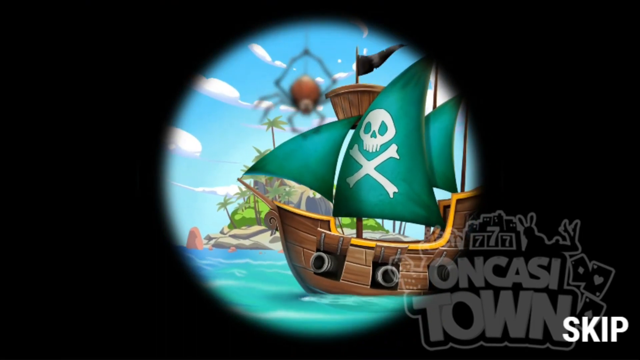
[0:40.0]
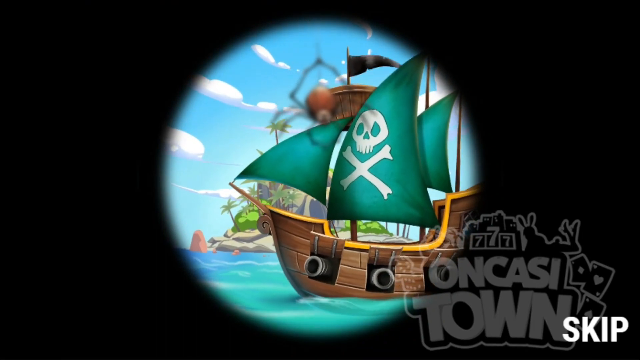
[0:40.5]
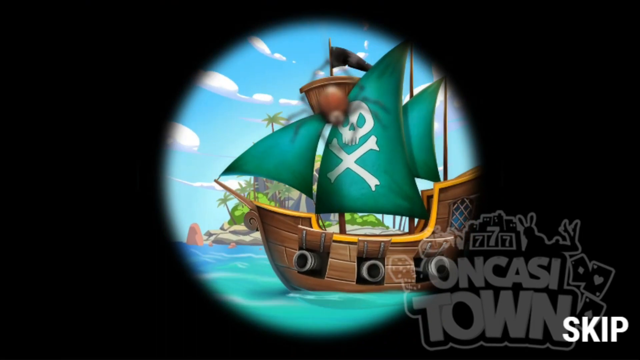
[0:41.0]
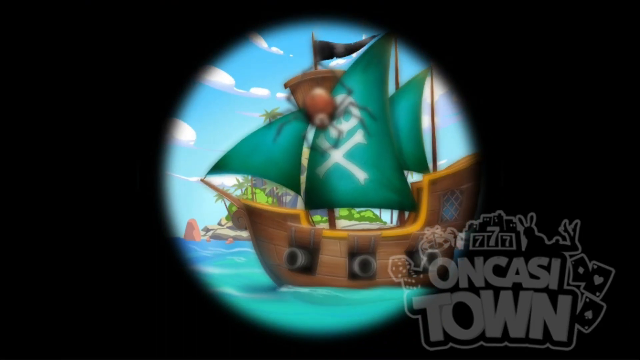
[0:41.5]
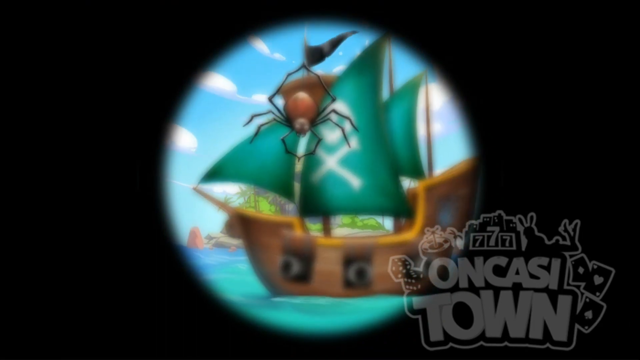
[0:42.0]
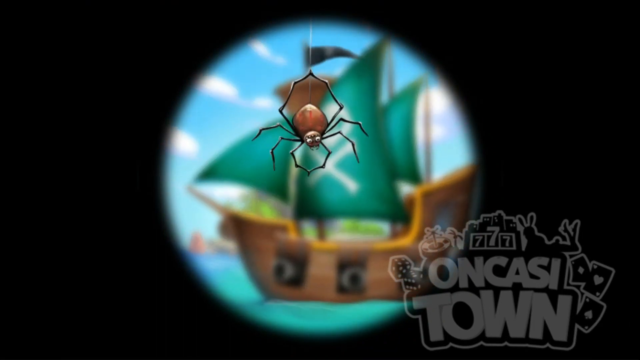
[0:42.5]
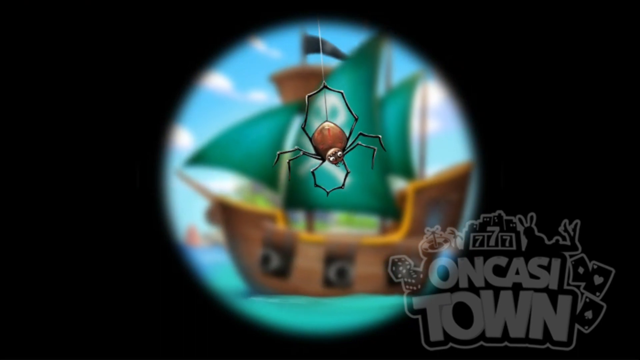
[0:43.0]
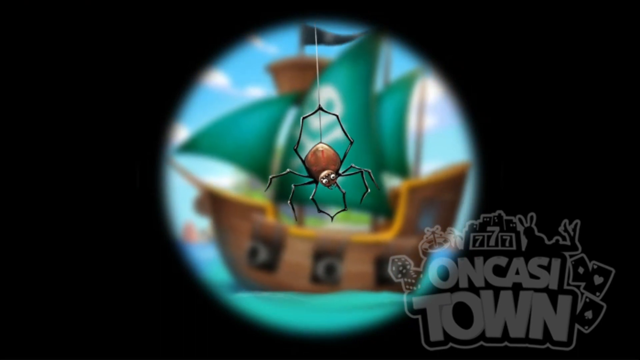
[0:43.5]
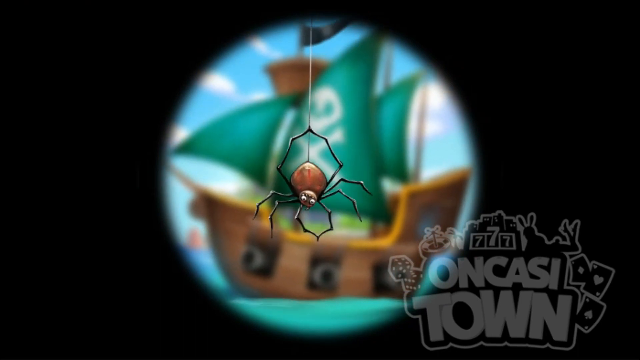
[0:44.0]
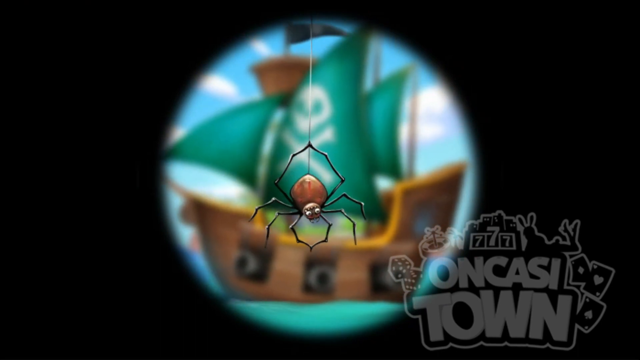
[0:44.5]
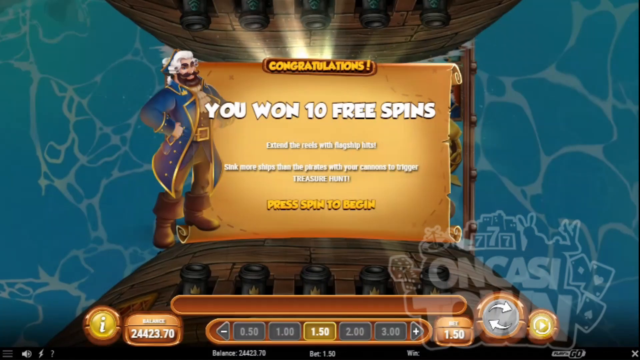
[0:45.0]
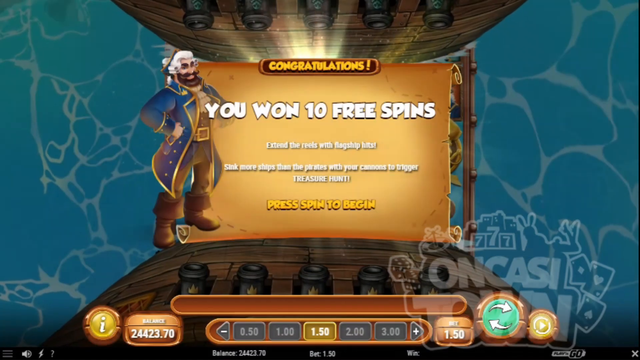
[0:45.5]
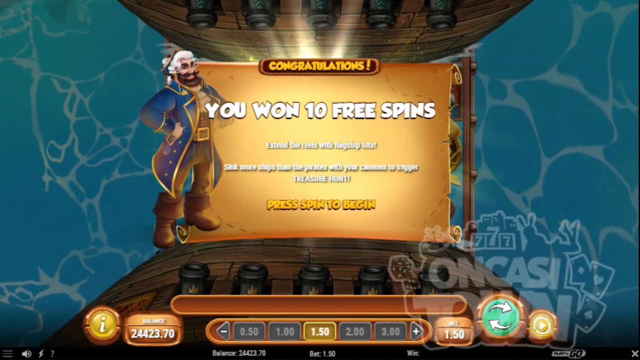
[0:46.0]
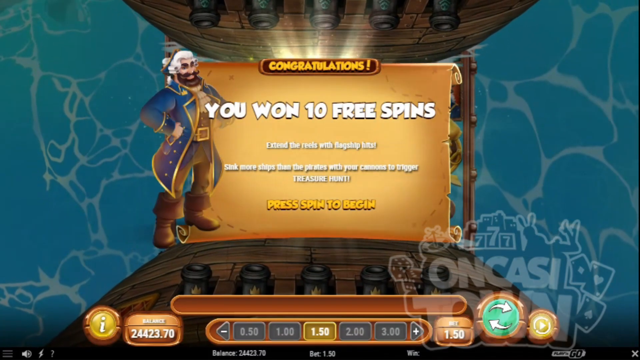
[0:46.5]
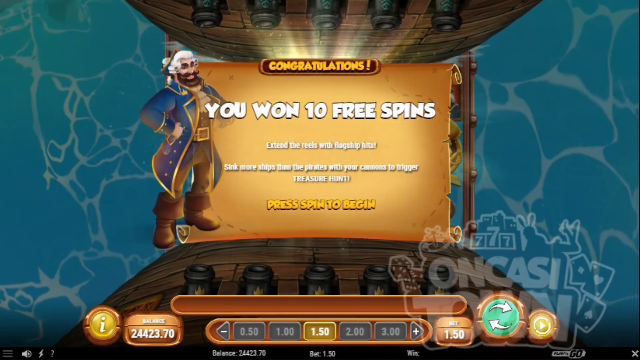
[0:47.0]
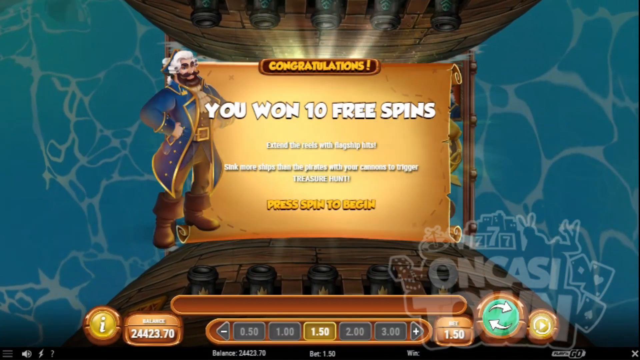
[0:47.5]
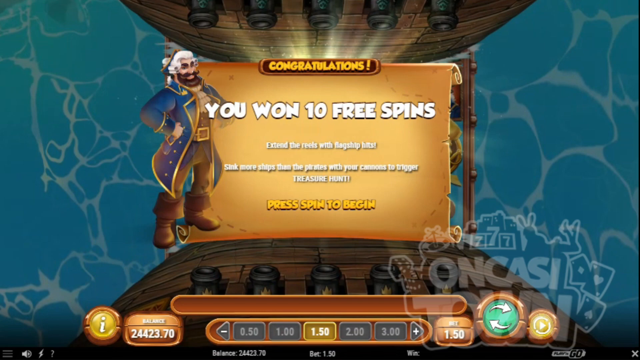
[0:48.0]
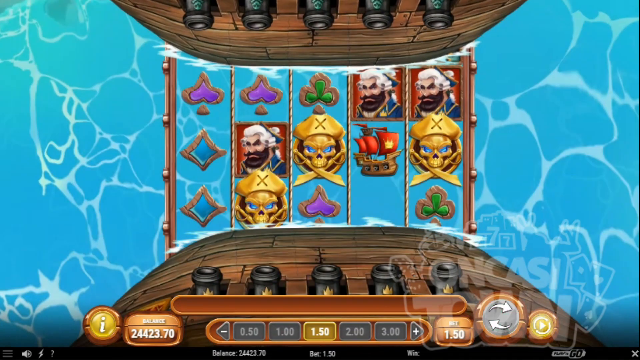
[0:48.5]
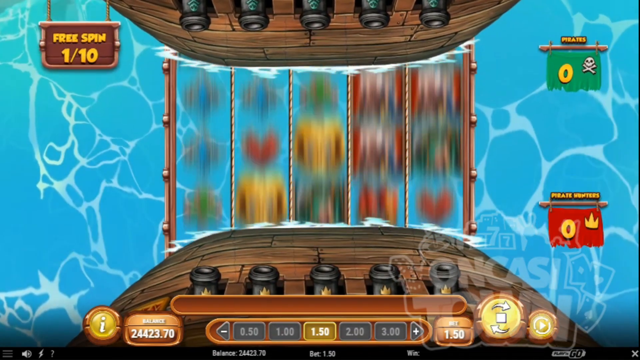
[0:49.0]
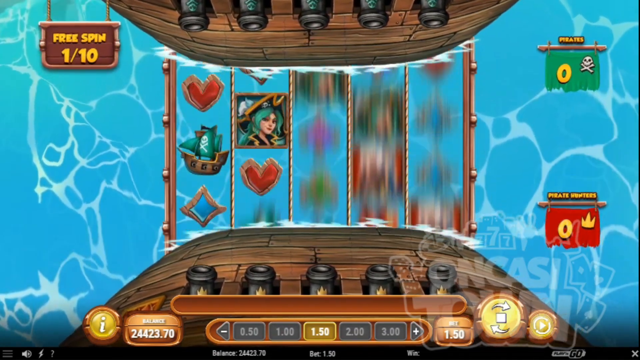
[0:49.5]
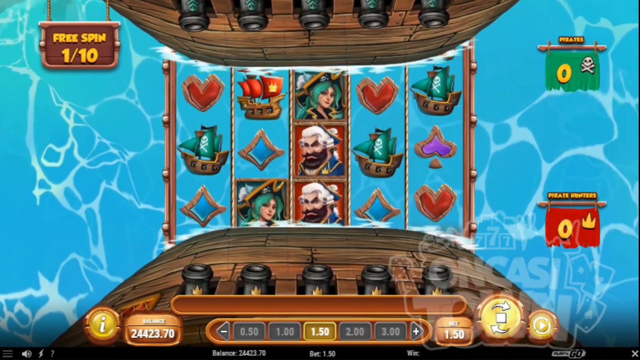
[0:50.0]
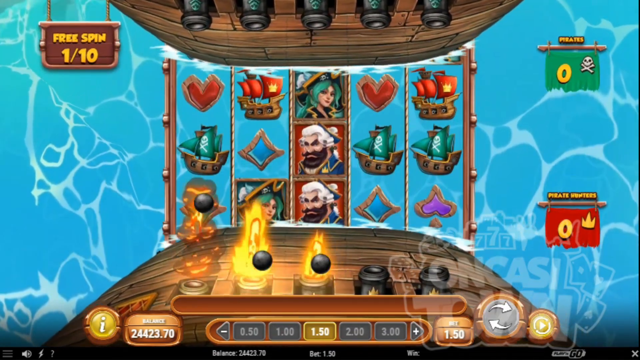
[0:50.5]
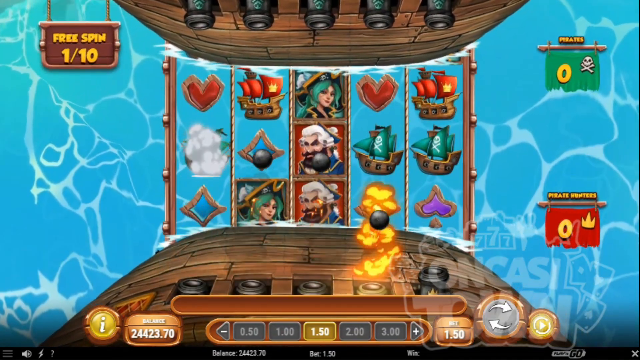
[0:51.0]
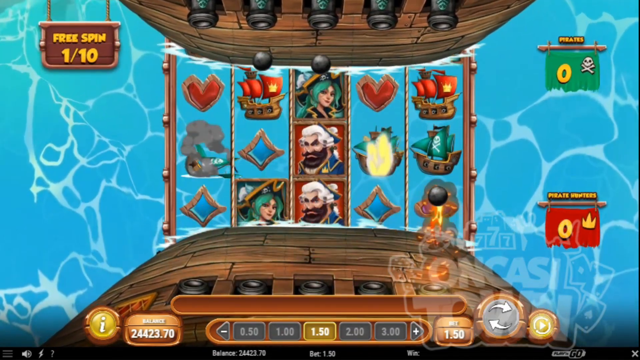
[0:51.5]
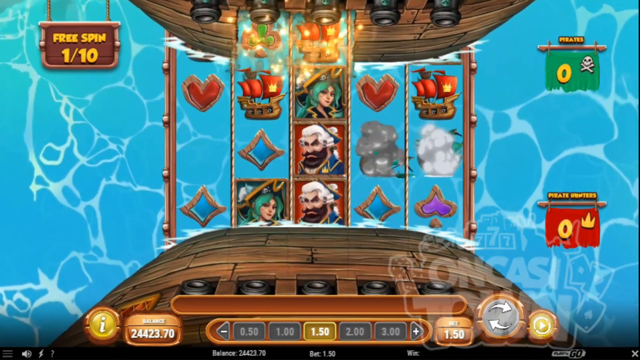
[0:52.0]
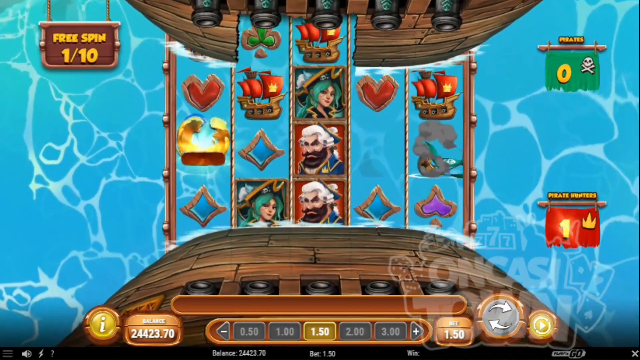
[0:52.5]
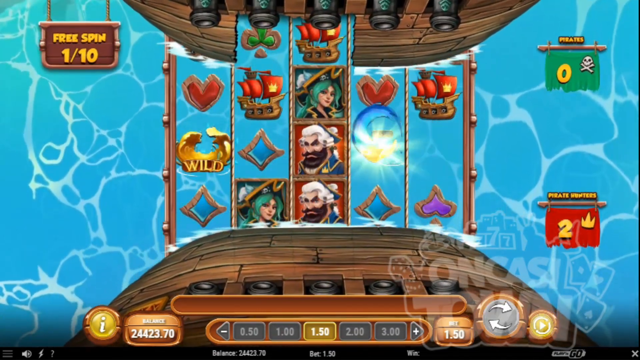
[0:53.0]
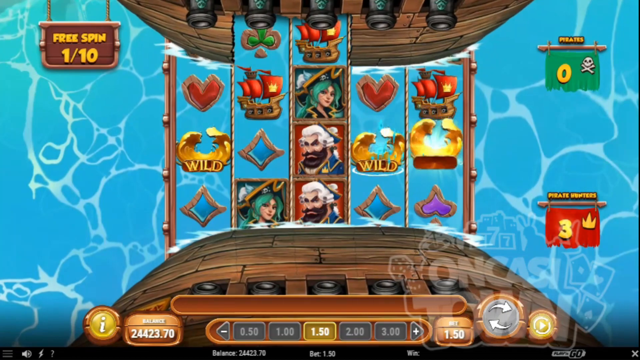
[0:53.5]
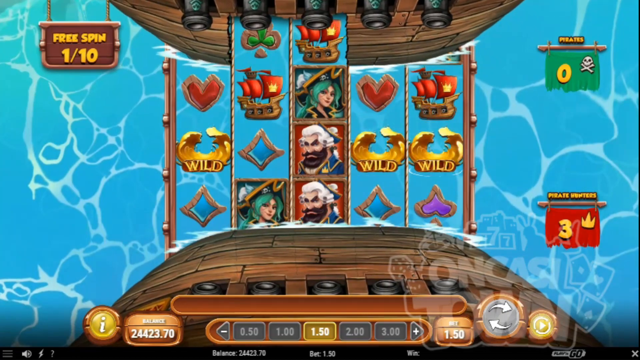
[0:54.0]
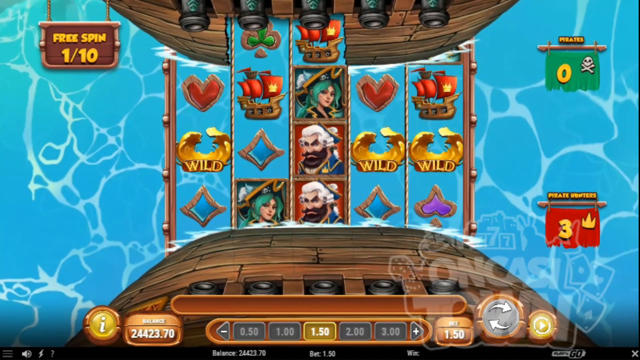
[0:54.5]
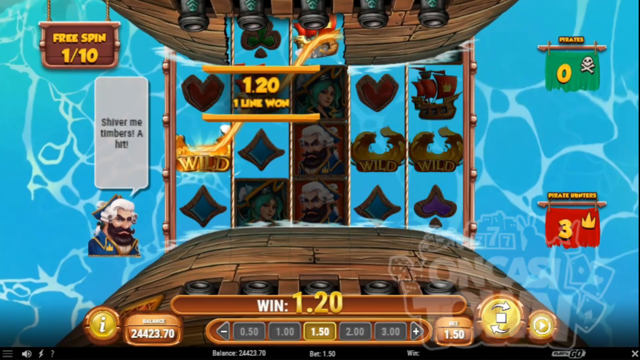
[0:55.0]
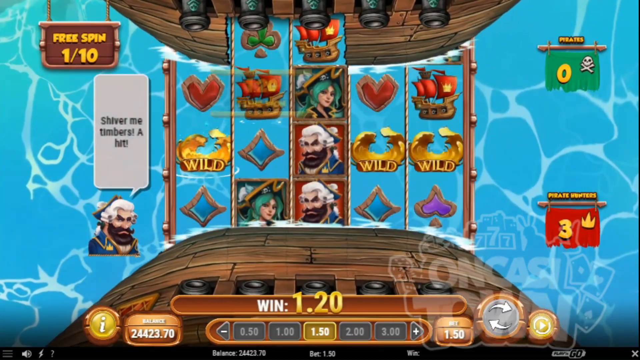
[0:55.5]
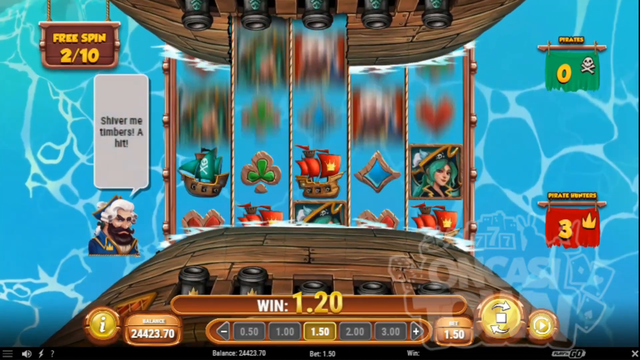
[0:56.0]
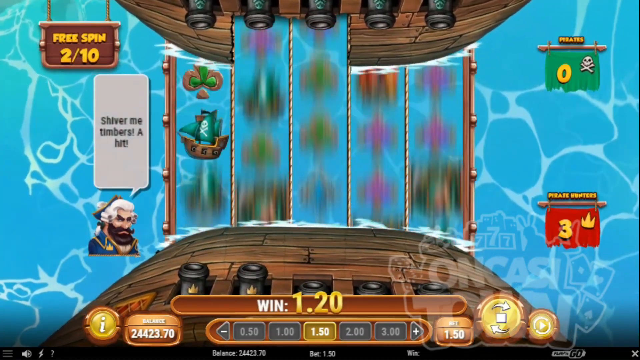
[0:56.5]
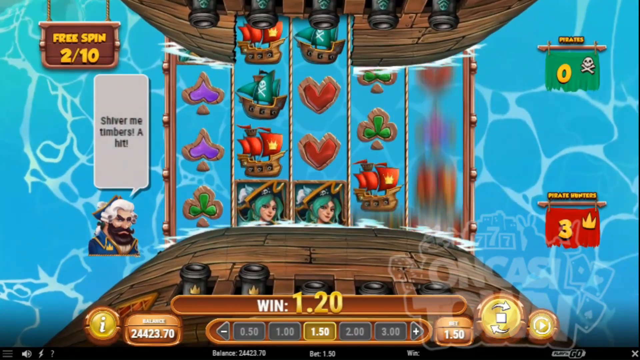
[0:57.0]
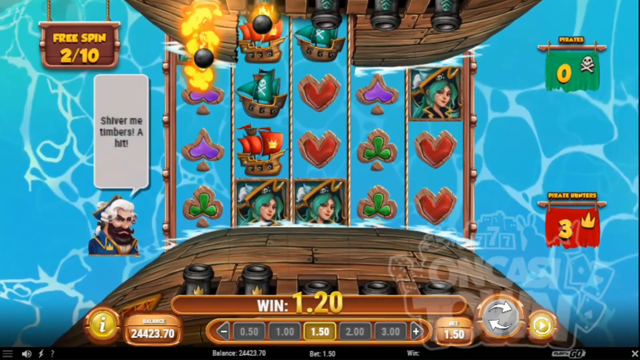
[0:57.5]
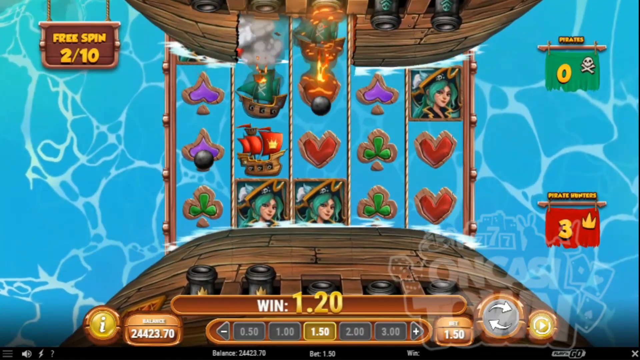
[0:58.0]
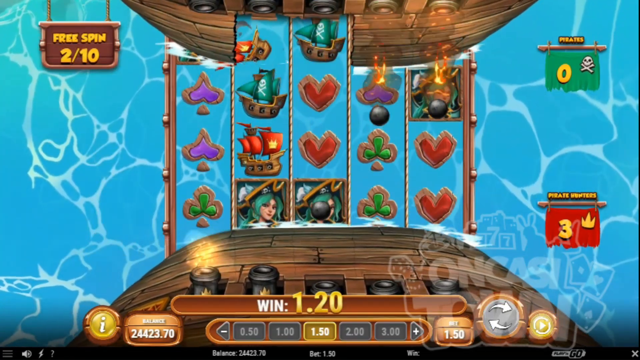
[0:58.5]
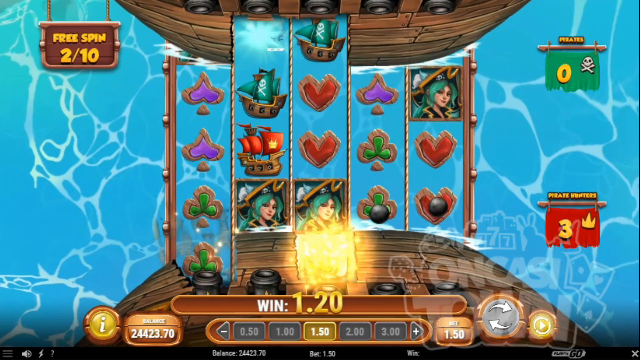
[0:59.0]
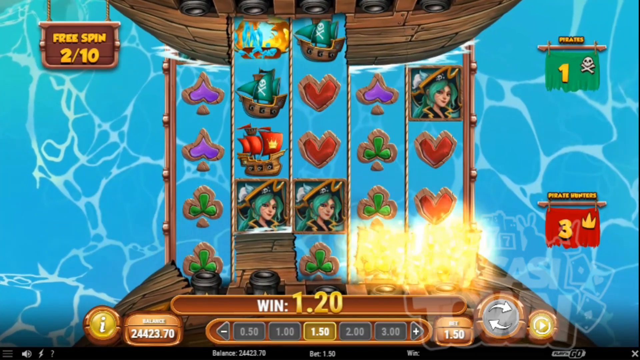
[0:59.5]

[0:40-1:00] The pirate ship sails from right to left, with the out-of-focus spider at the top of the circular wipe. The spider hangs around for a while and comes into focus as the pirate ship goes out of focus. The scene then mixes through to a graphic with pirates standing on the left-hand side and a kind of goldish scroll in the middle of the screen saying "congratulations, you won 10 free spins", some other text that is not quite readable, and "press spin to begin". It is on a mottled bluey-green background with a sort of wave effect. A few glints move across the scroll, then the scroll mixes off and the normal game returns, with some scores coming up. A graphic on the top left says "free spin", and there are two graphics, one in the top right and one in the bottom right-hand corner. There is a ship shape at the top and at the bottom of the screen, and at one point cannonballs fly up the screen, hitting the ship, as the ships fire cannonballs at each other. The top right graphic then says "1" in green, and the bottom right graphic says "3" in red.